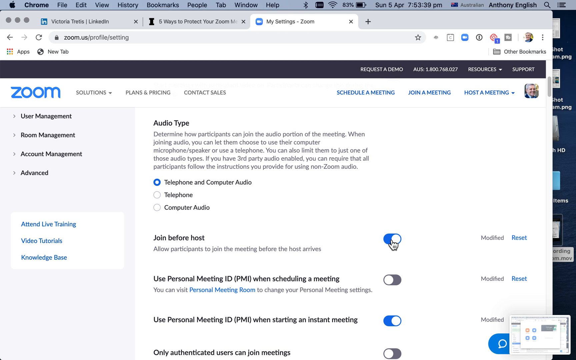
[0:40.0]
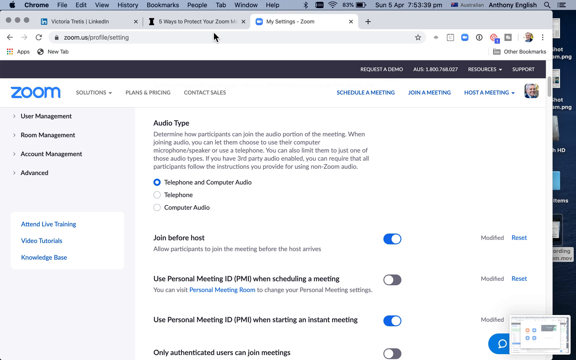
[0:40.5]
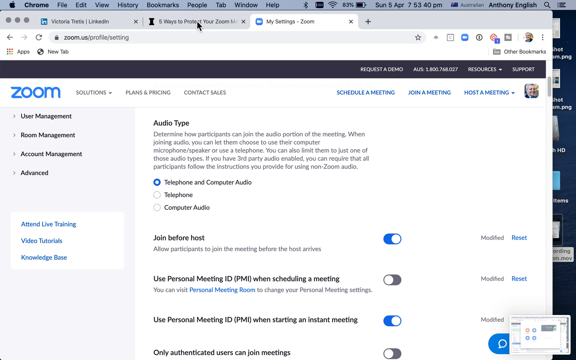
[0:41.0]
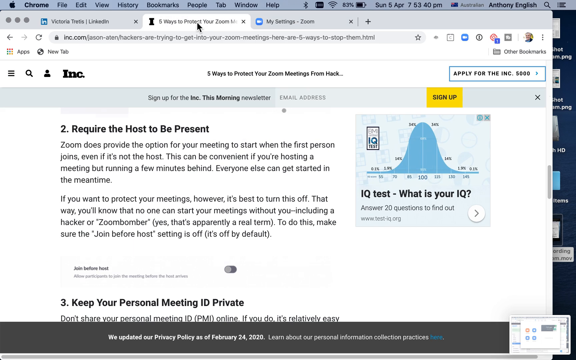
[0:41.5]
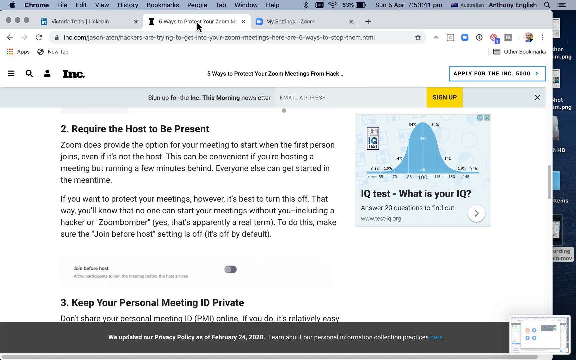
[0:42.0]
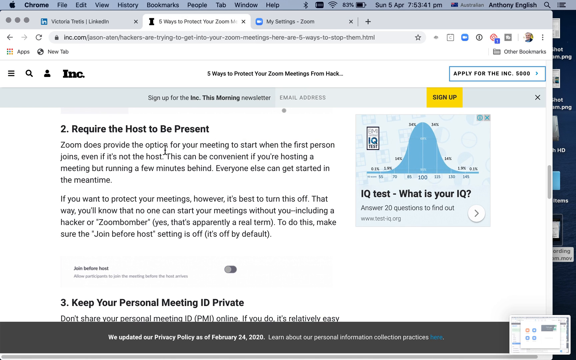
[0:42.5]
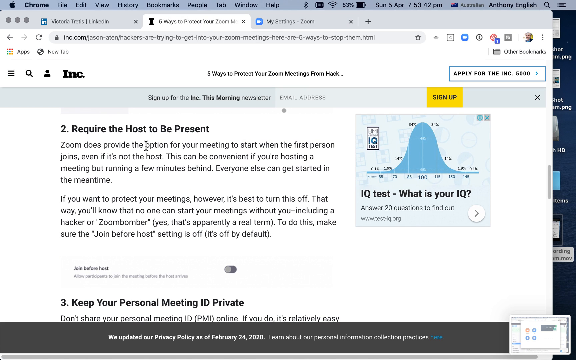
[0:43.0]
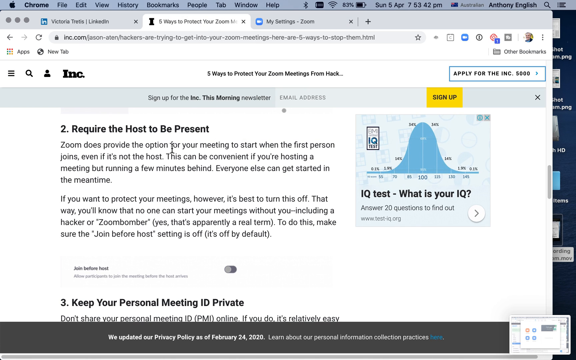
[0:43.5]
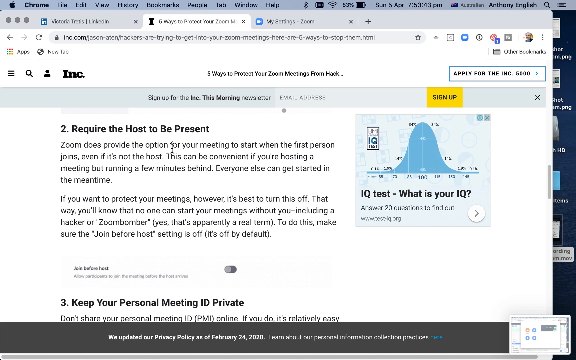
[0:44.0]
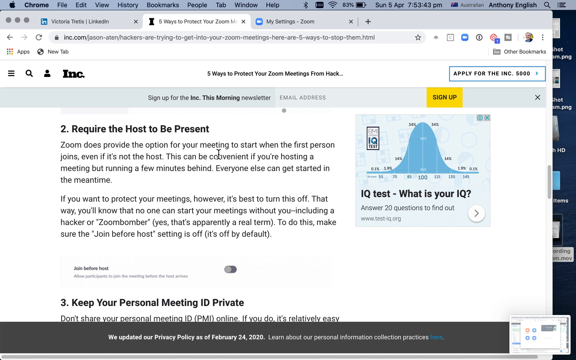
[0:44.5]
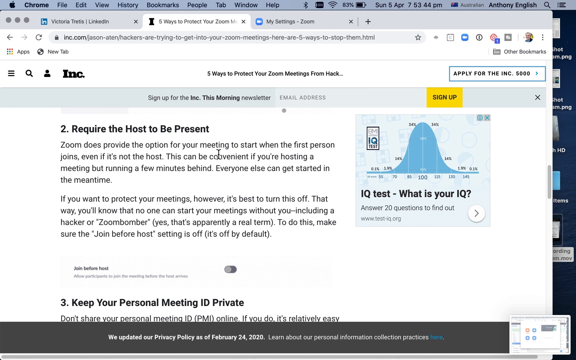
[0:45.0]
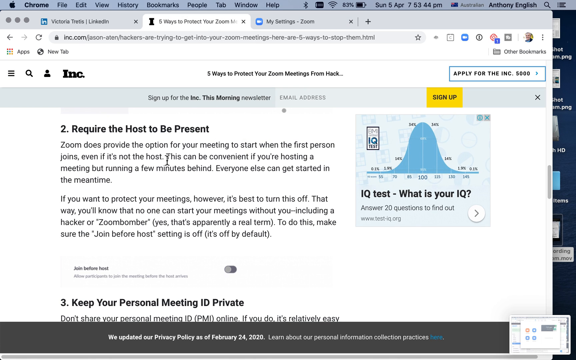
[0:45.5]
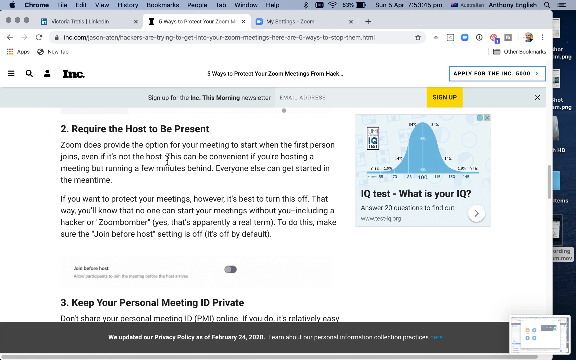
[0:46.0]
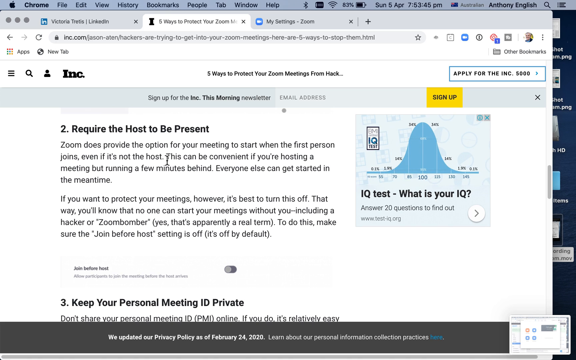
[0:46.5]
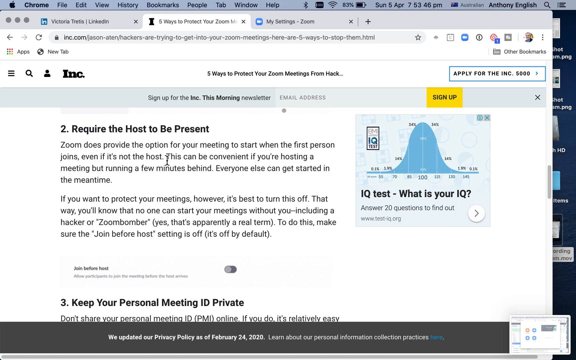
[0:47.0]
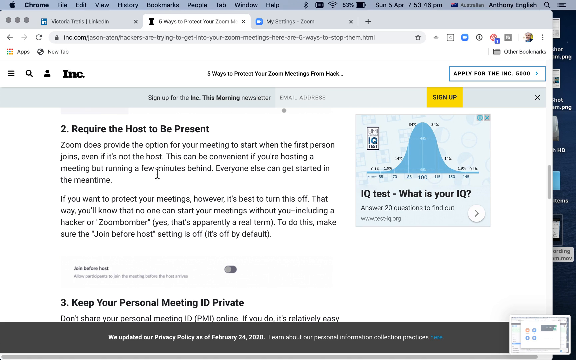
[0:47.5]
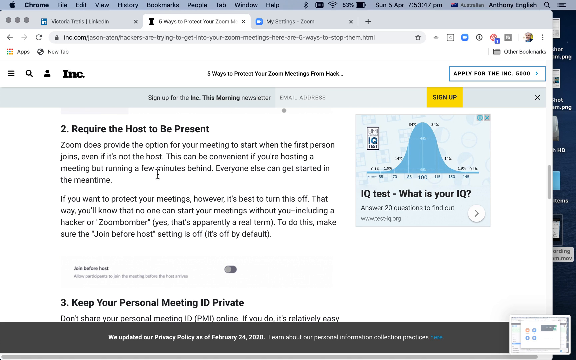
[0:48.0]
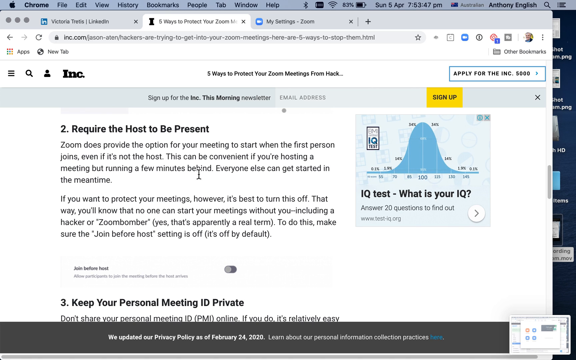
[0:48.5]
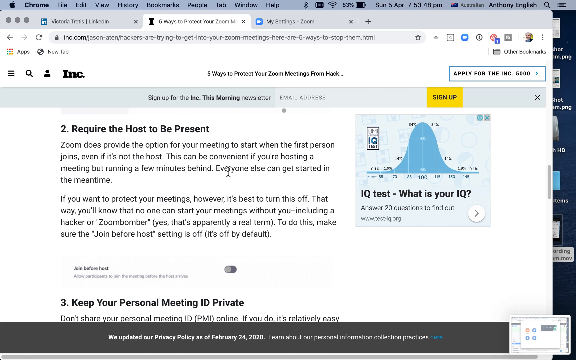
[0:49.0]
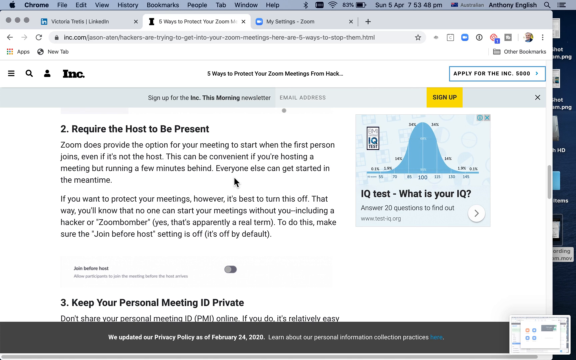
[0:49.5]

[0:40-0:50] A page shows settings for joining a Zoom meeting, with further steps. No people, grass, buildings or animals are shown. A diagram then seems to come up.